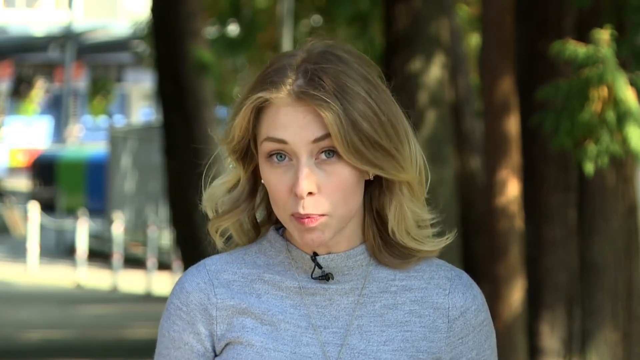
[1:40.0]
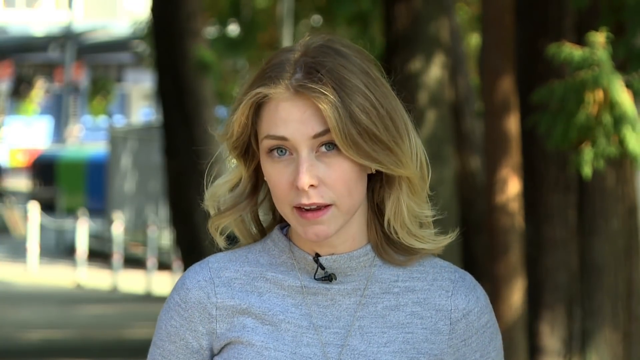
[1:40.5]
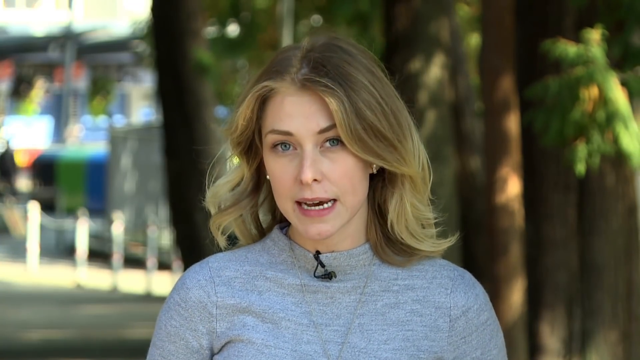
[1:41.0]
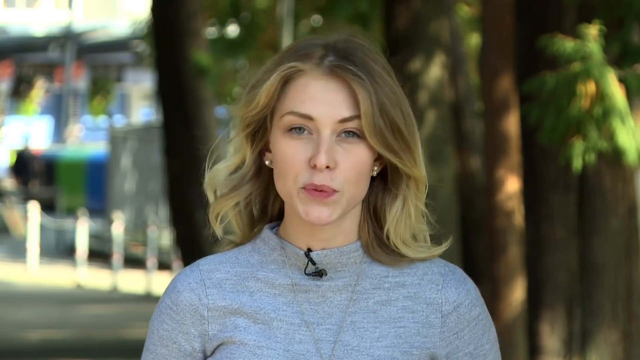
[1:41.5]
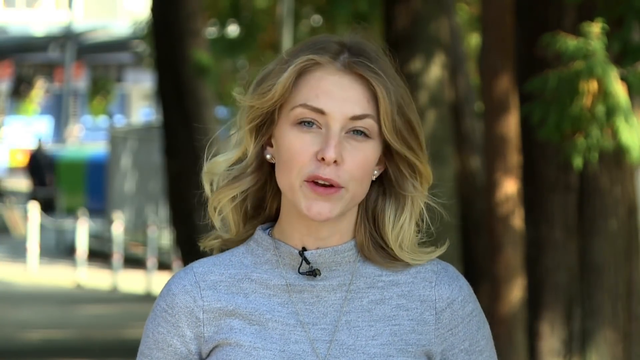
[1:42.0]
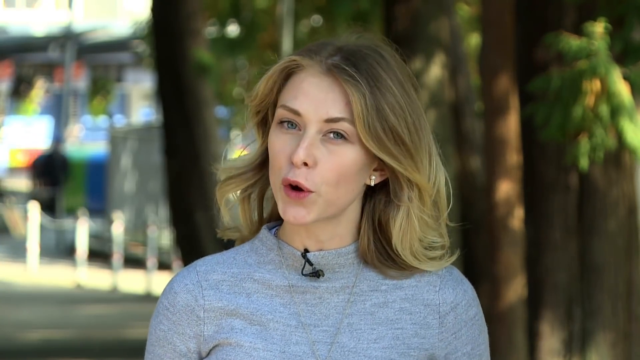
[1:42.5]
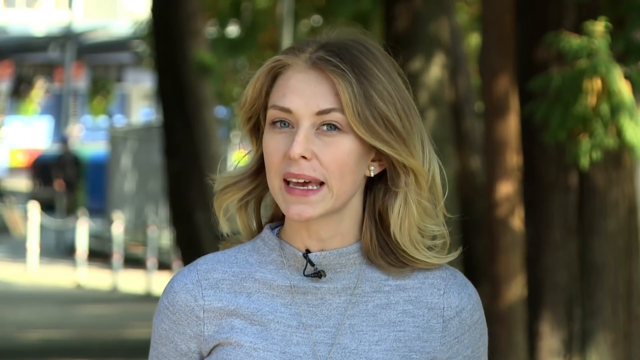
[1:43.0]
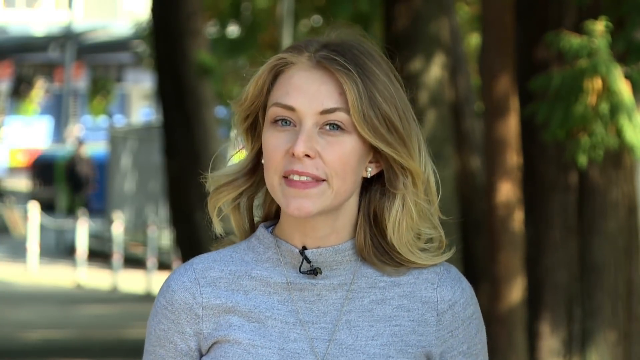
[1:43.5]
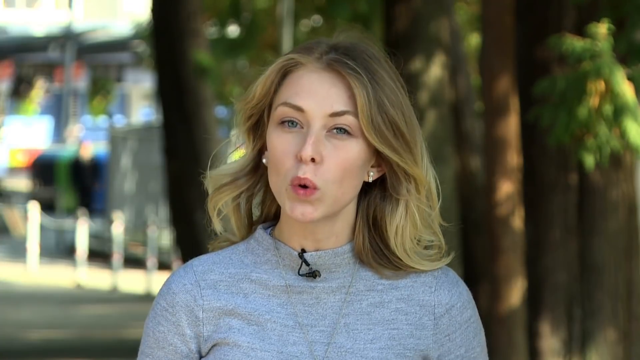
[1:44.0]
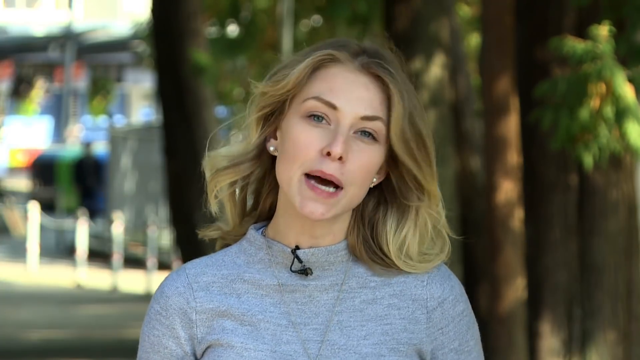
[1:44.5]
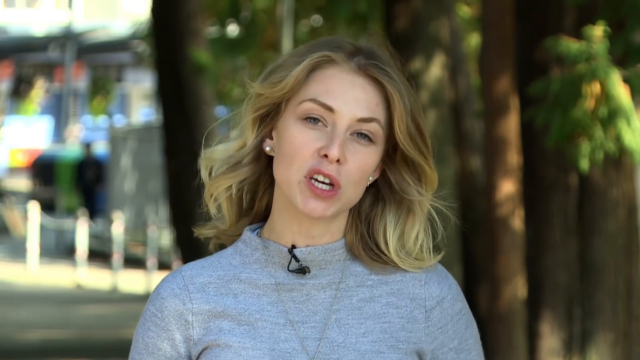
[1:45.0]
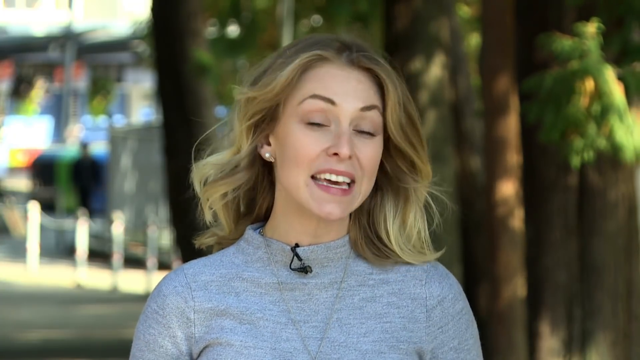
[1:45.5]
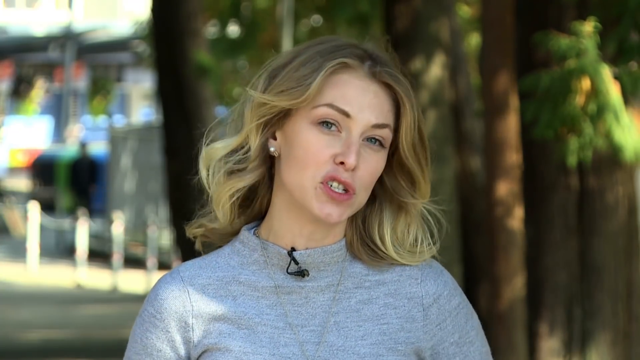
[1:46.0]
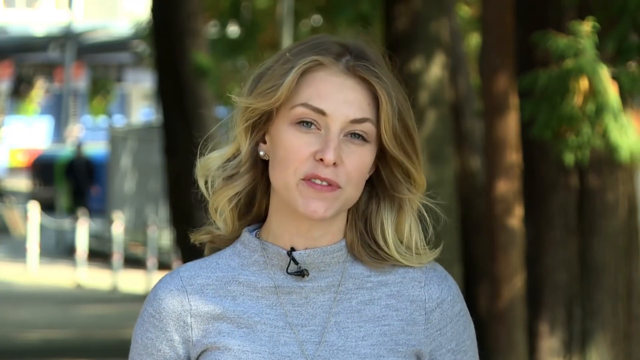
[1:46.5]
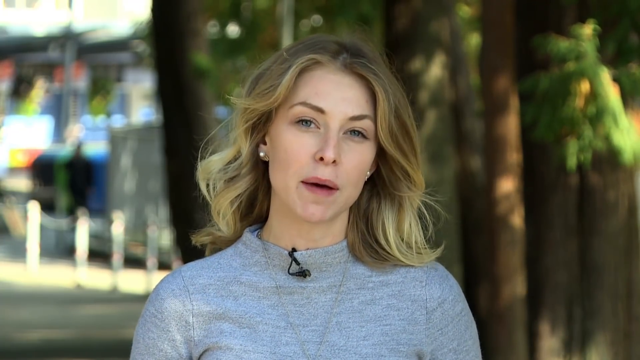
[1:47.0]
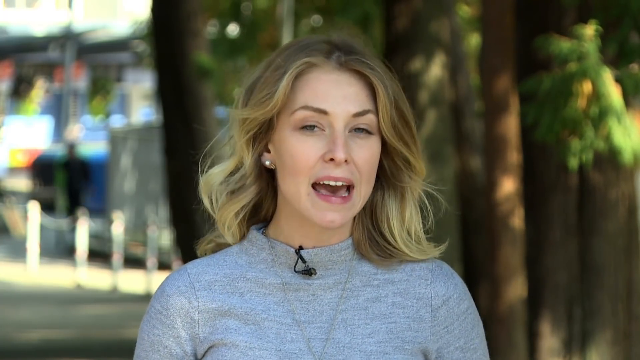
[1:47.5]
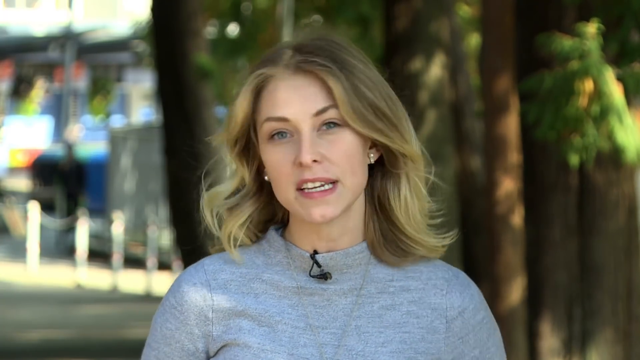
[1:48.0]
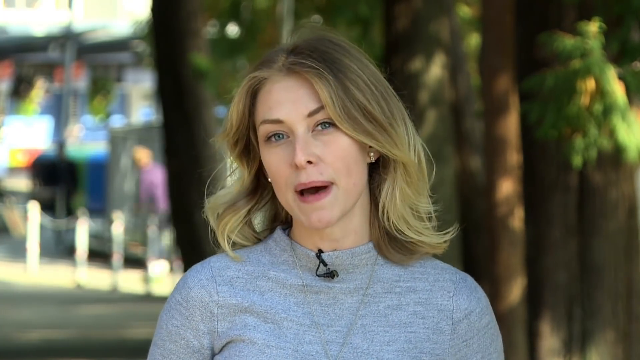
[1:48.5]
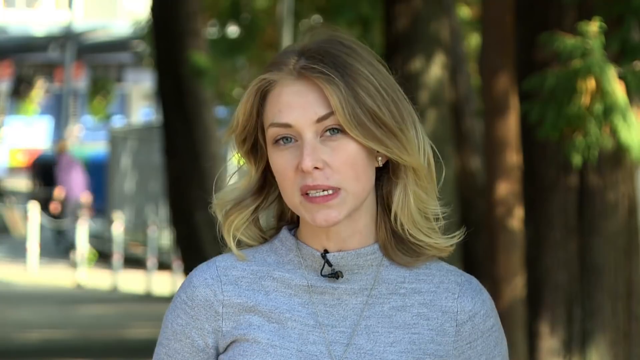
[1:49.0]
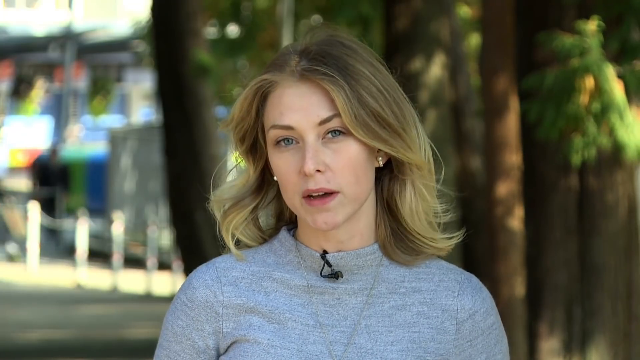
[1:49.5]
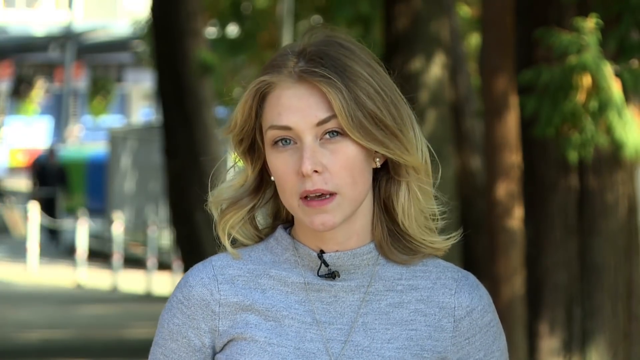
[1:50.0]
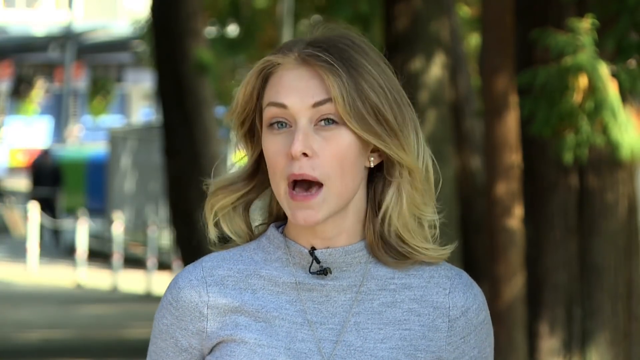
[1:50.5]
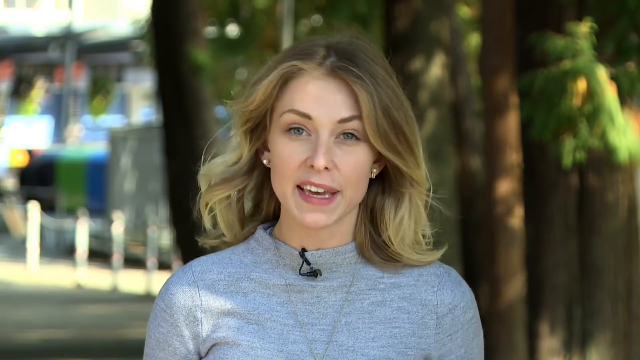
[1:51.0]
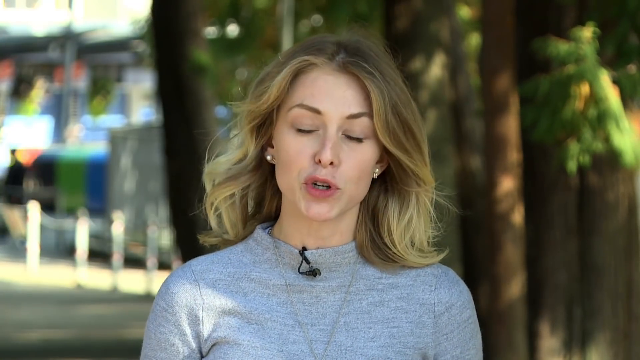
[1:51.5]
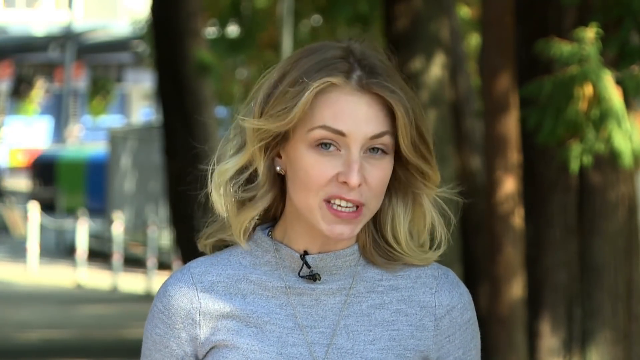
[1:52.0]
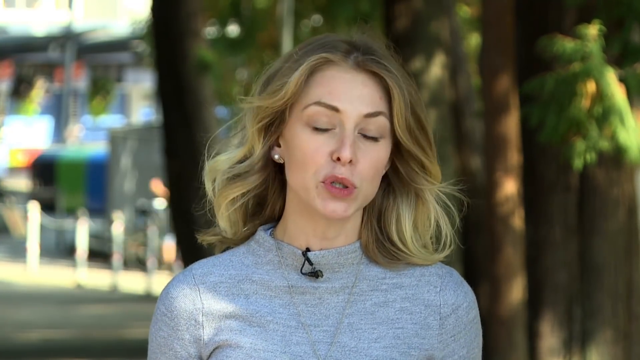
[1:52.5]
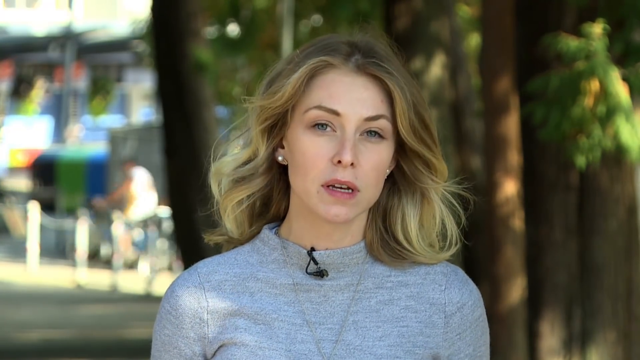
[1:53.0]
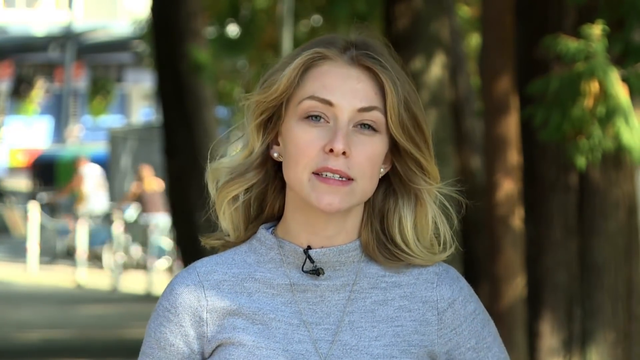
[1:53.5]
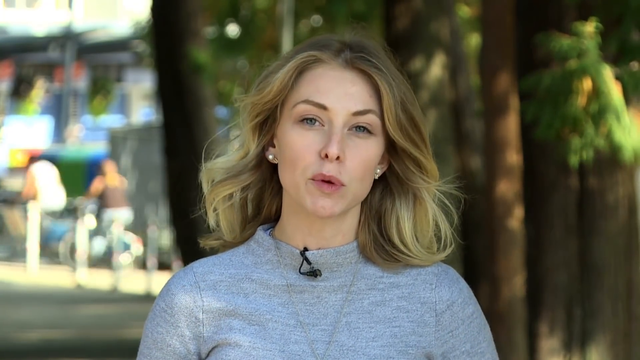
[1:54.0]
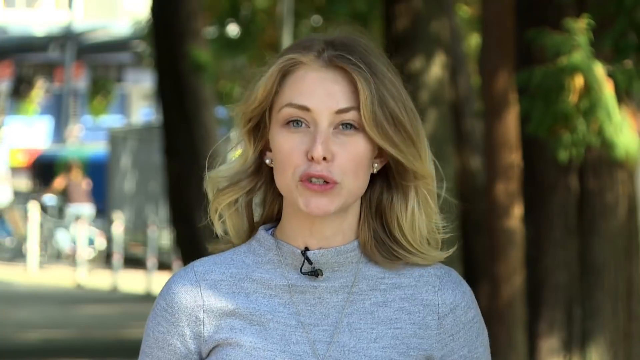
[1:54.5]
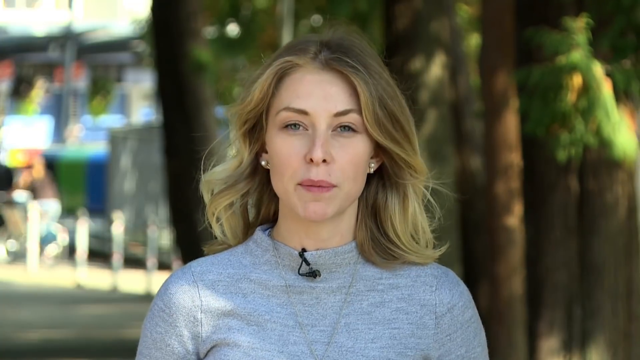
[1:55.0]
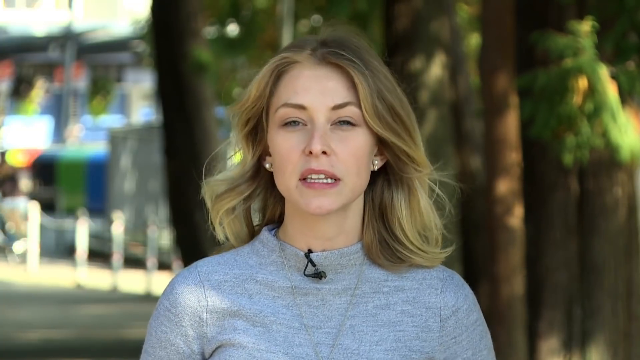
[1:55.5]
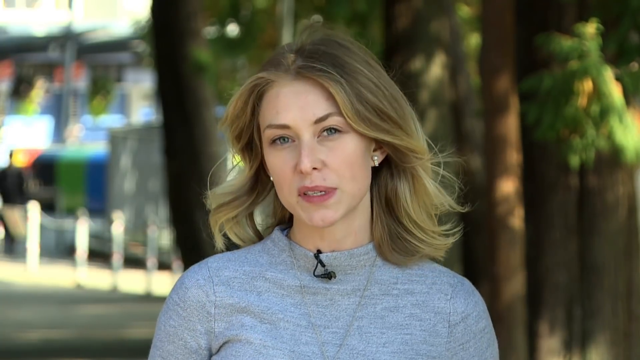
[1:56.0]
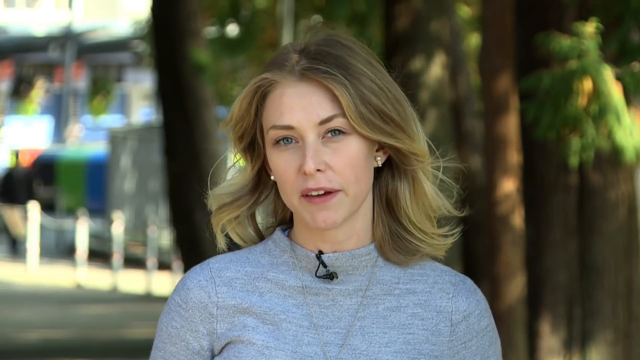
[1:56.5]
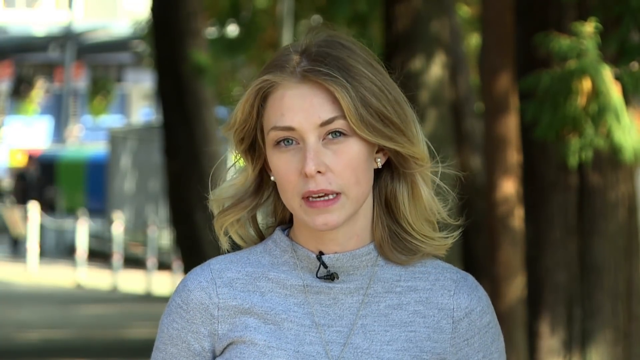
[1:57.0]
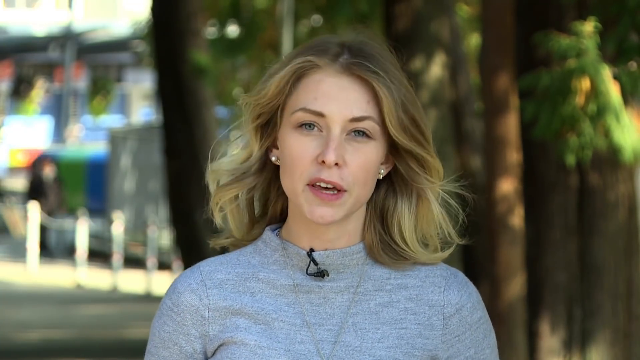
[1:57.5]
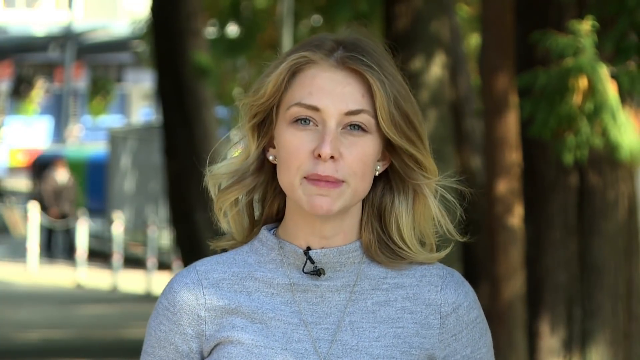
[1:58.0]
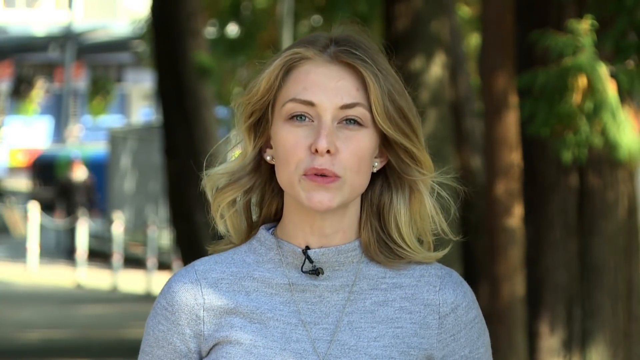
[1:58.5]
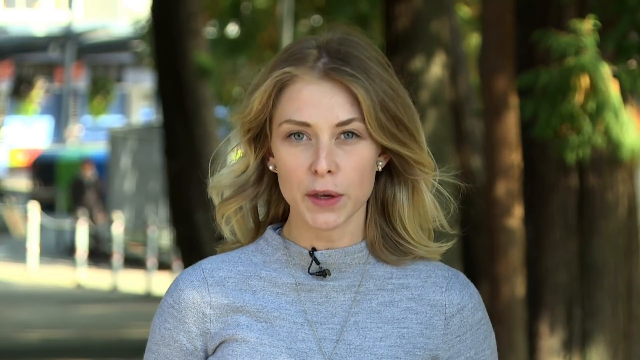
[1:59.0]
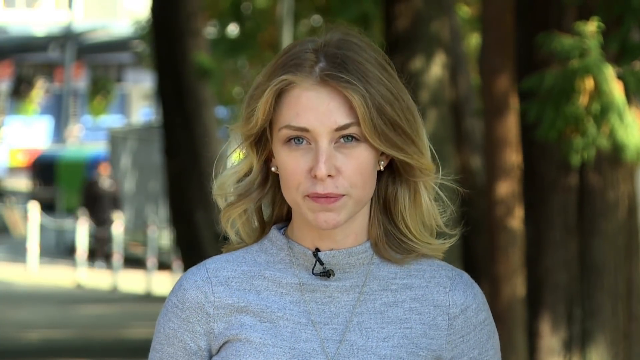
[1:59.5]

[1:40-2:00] The blonde-haired woman continues to be shown, wearing a gray T-shirt and with something that looks like a microphone on her neck. Behind her are trees and greenery. In the background someone walks in the distance, someone skates behind her, people ride bikes, and someone walks by. She seems to be talking, as if in a conversation with someone, possibly about the place with the dolphins.